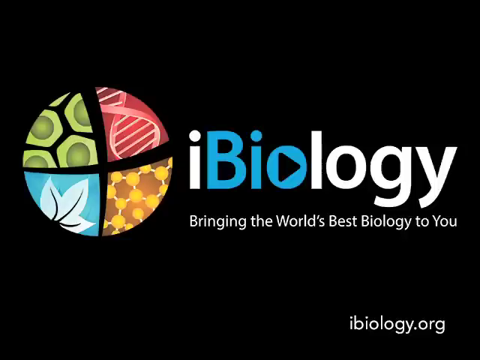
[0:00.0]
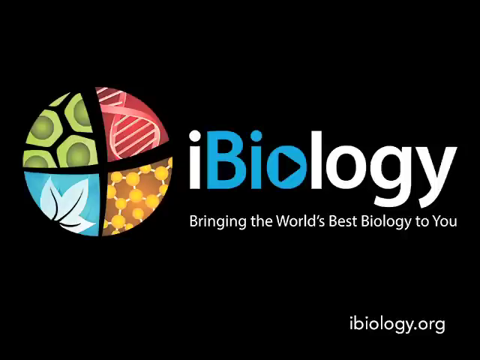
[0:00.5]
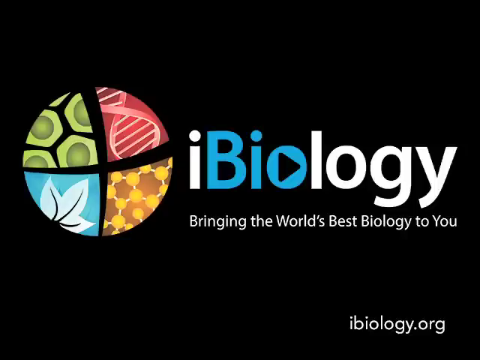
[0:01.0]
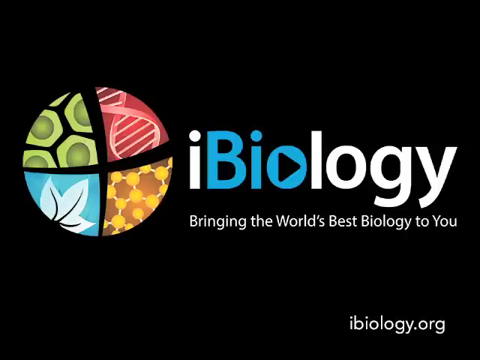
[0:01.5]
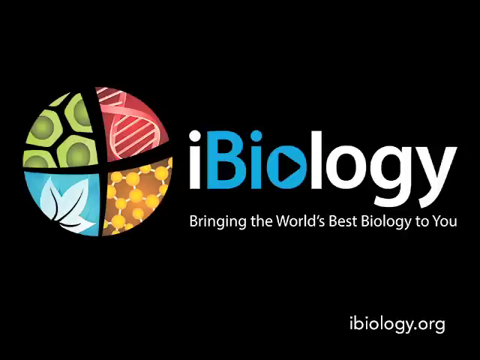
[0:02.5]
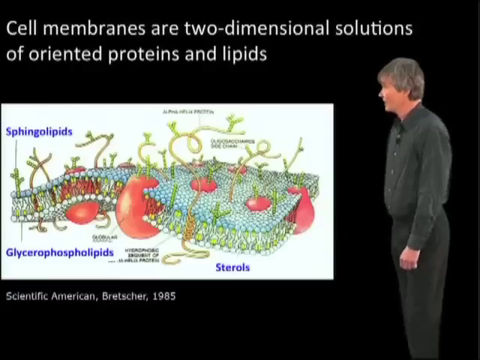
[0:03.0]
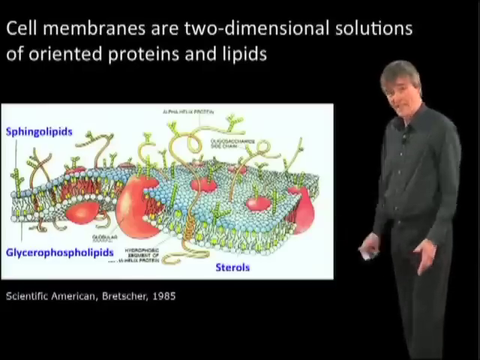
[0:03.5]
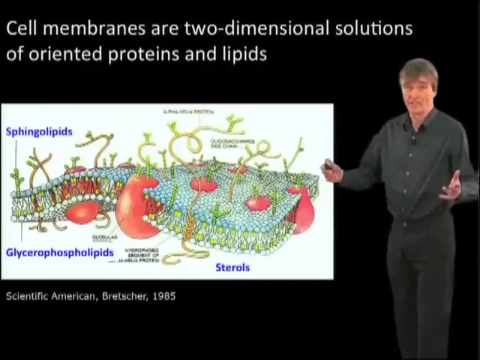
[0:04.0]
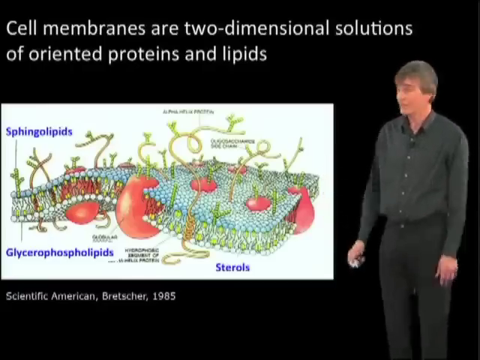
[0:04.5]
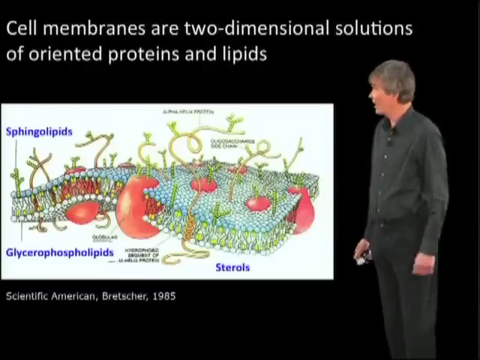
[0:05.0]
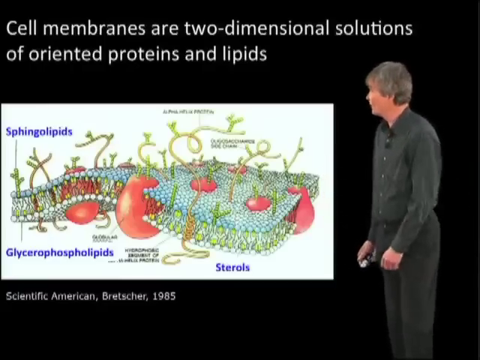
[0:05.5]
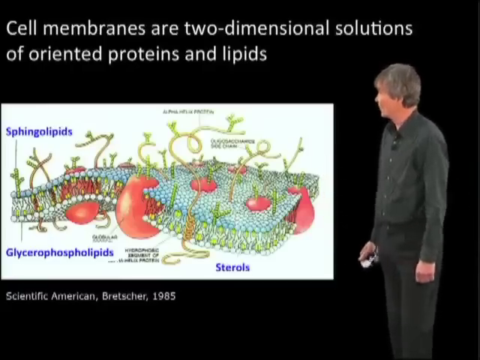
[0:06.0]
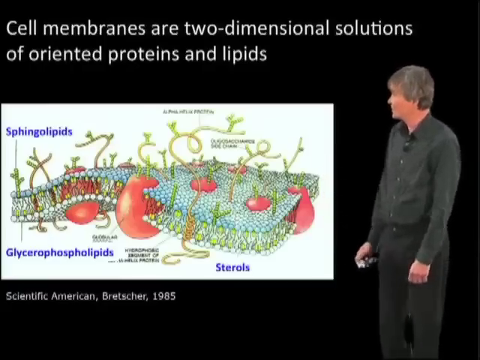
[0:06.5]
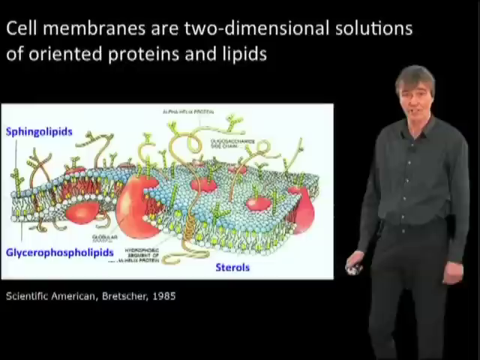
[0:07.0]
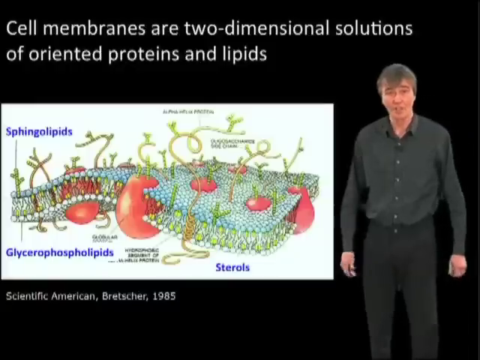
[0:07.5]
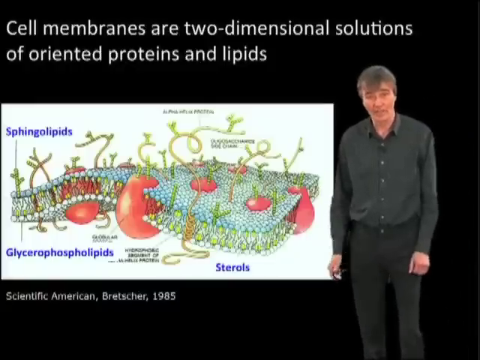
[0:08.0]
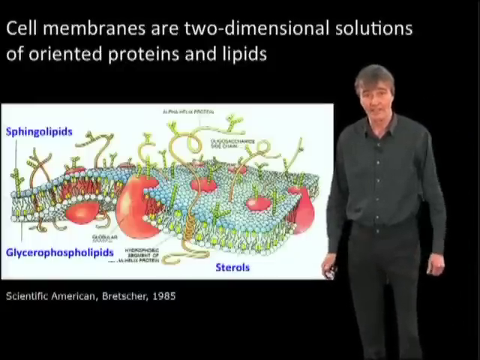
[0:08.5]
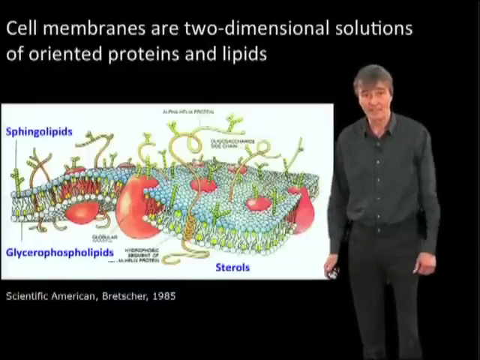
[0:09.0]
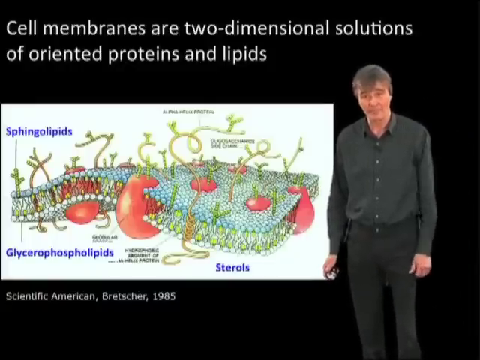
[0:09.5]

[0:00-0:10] The video opens with the iBiology logo and tagline, "bring the world's best biology to you," with "iBiology.org" in the bottom right corner. This first image has a black background with the iBiology logo, which is like a sphere divided into four parts: one part looks like chlorophyll, then, going counterclockwise, a DNA molecule, a molecule made of spheres and sticks, and finally what looks like a blue leaf. The next scene shows an instructor in a black shirt and pants who looks like he is in his fifties, talking. A photo insert of a cell membrane with labels around it appears; the picture is from the Scientific American edition, 1985. Text at the top reads "cell membranes are two-dimensional solutions of oriented proteins and lipids." The membrane picture carries many labels, including glycerophospholipids, sphingolipids and sterols. The instructor holds a clicker to switch the slides behind him, makes periodic eye contact with the camera, and sometimes looks at the screen behind him.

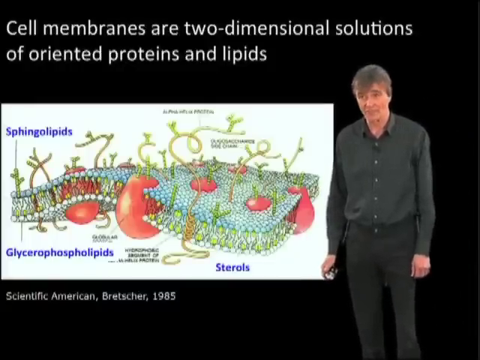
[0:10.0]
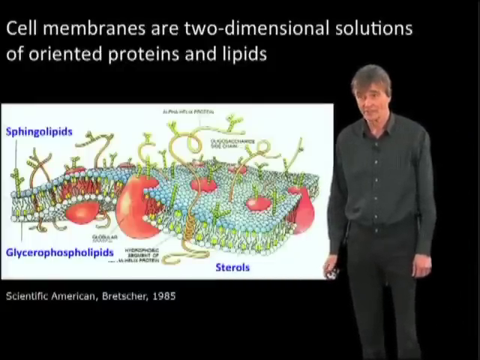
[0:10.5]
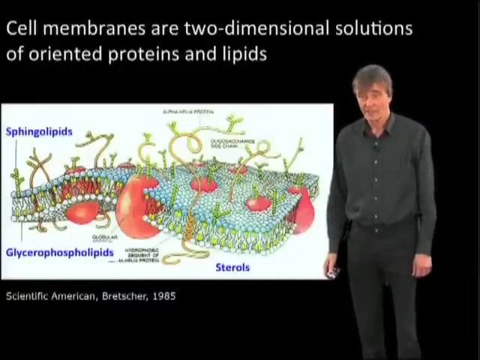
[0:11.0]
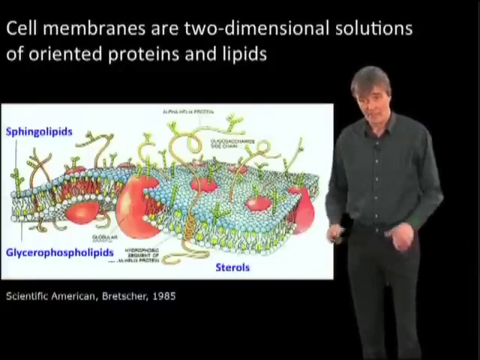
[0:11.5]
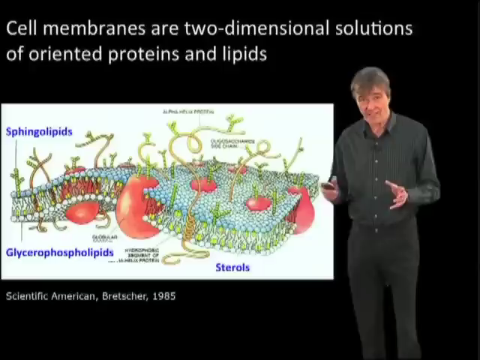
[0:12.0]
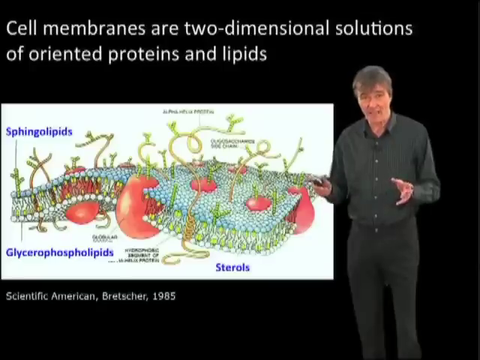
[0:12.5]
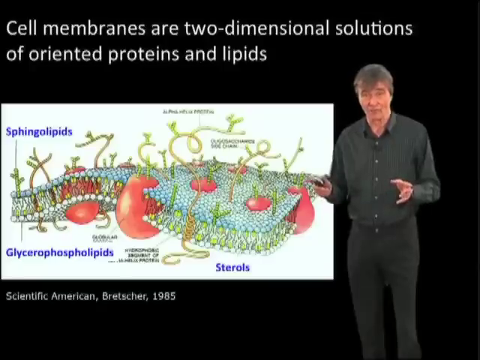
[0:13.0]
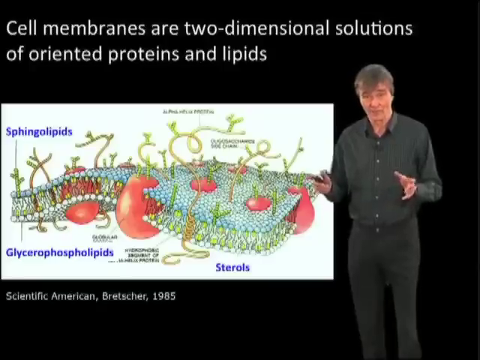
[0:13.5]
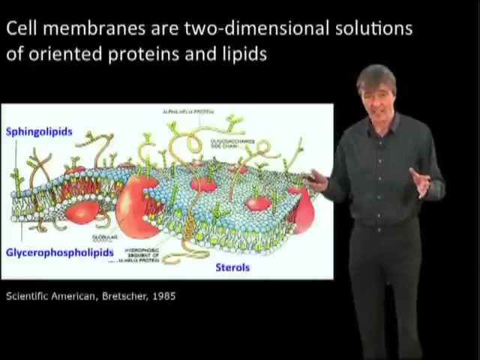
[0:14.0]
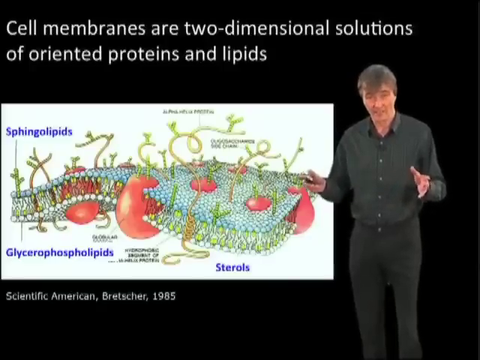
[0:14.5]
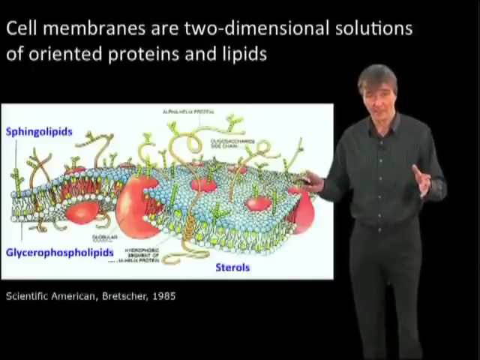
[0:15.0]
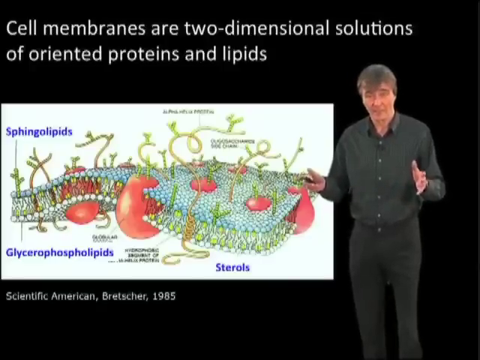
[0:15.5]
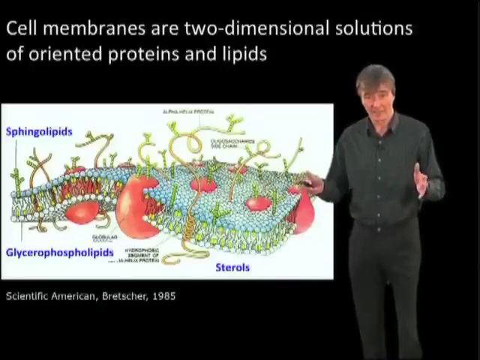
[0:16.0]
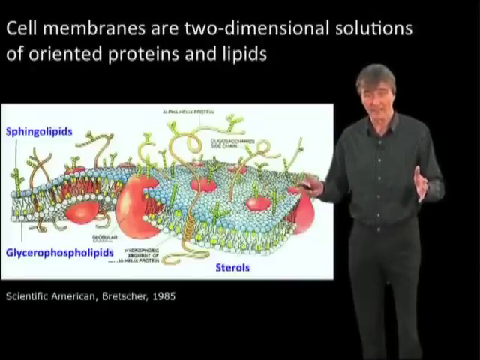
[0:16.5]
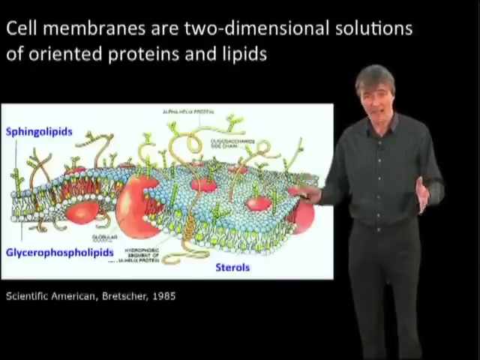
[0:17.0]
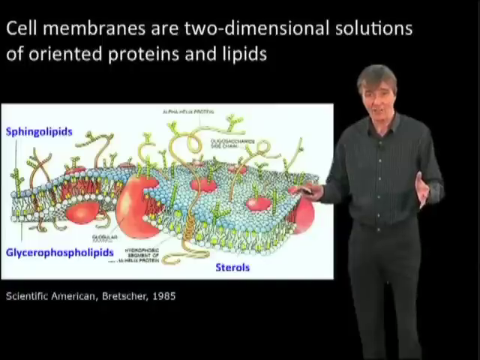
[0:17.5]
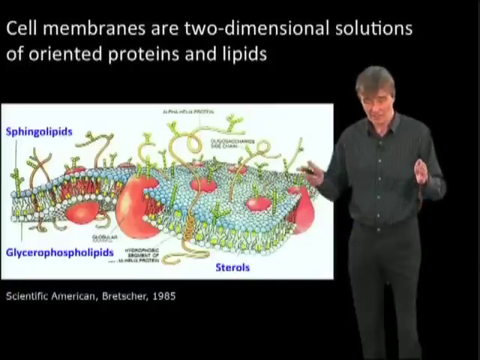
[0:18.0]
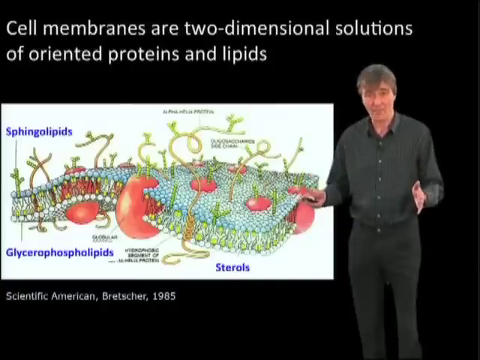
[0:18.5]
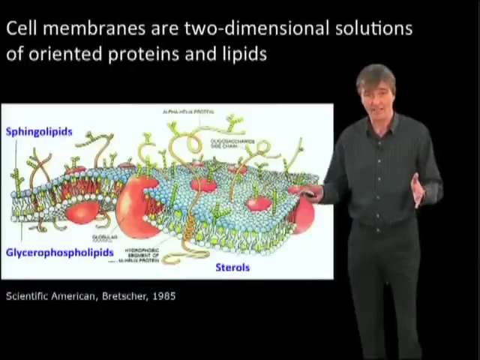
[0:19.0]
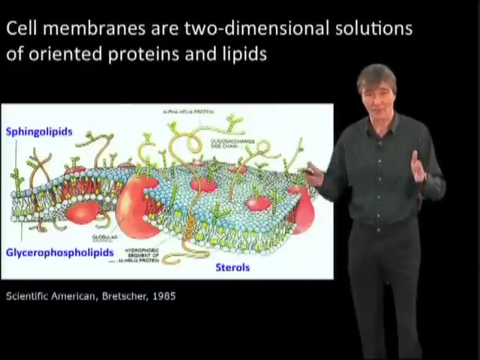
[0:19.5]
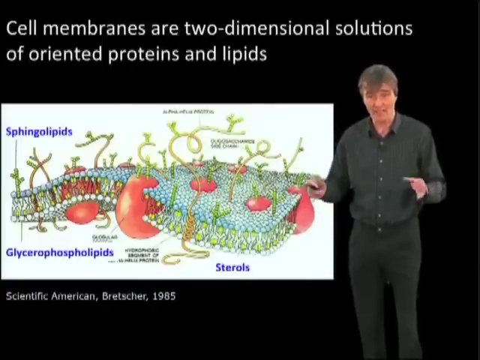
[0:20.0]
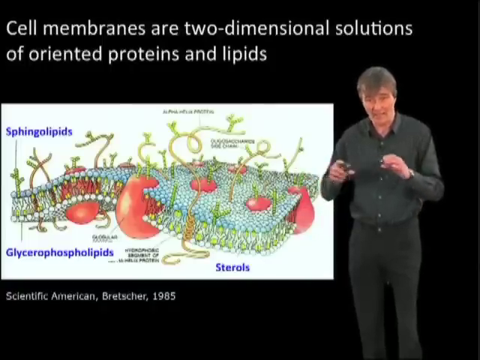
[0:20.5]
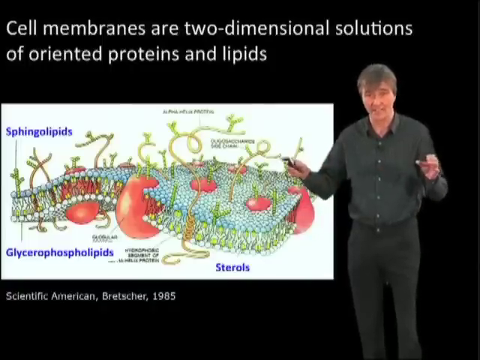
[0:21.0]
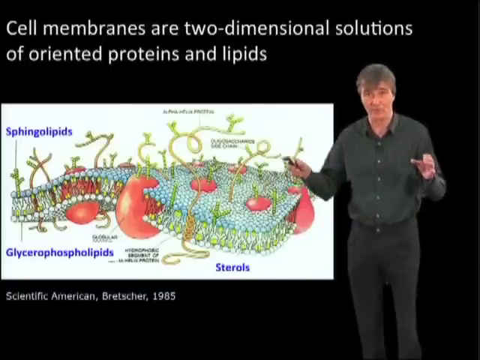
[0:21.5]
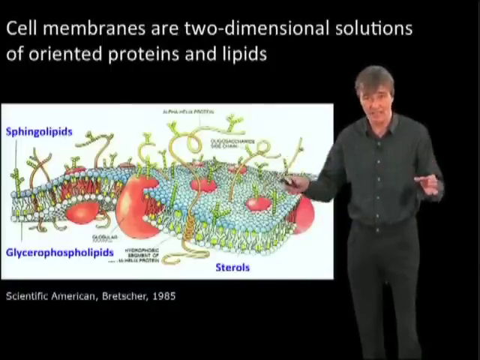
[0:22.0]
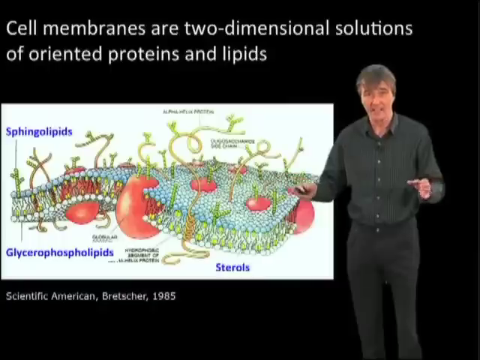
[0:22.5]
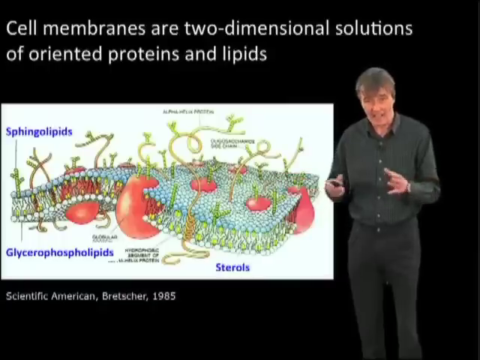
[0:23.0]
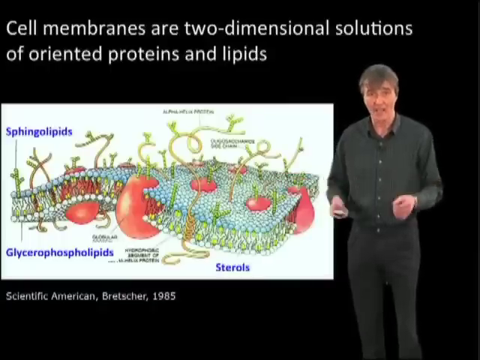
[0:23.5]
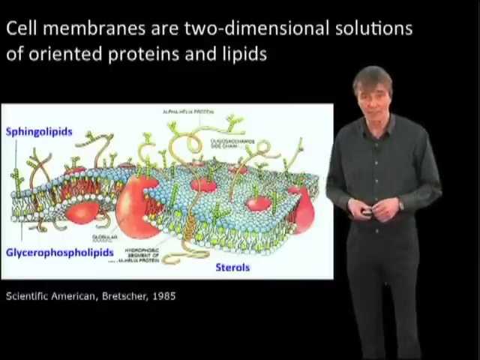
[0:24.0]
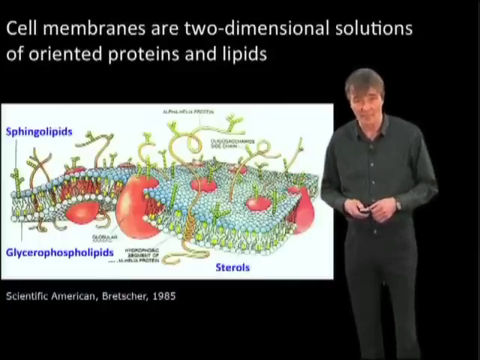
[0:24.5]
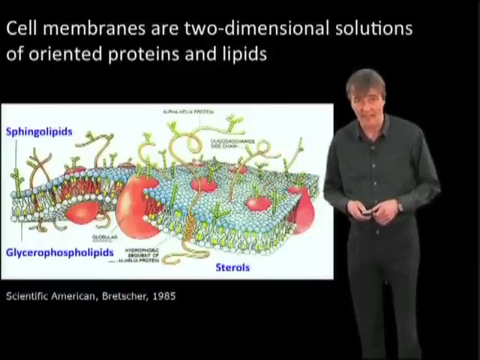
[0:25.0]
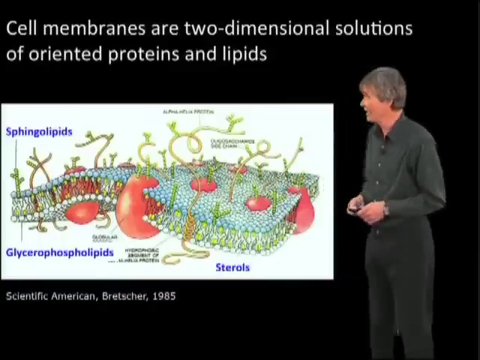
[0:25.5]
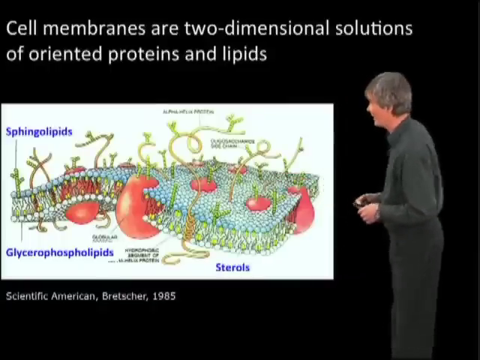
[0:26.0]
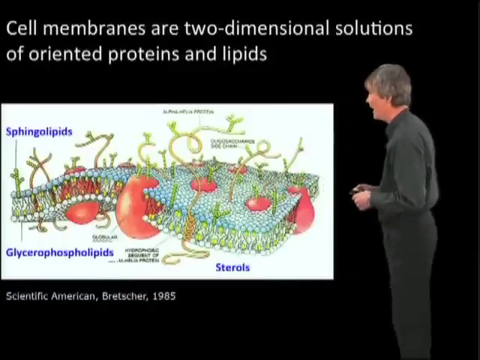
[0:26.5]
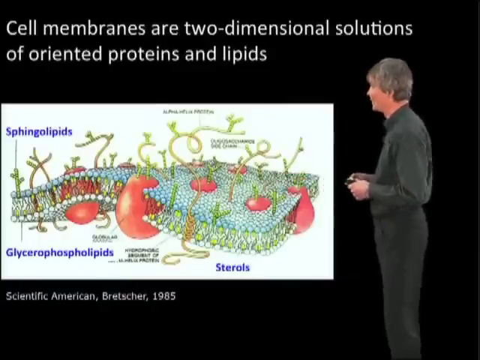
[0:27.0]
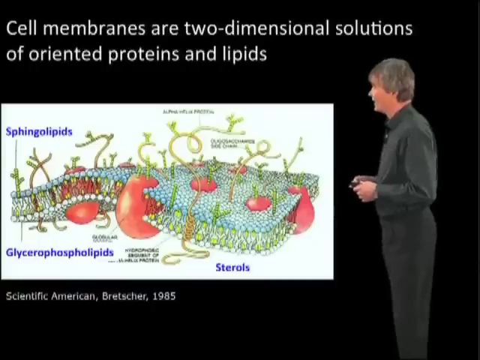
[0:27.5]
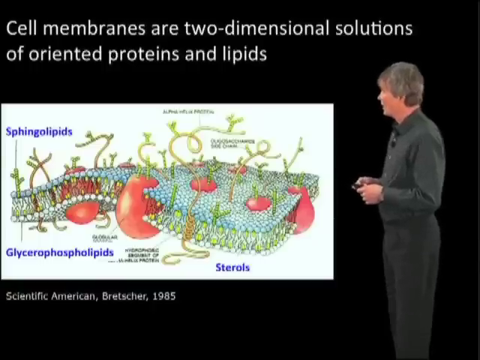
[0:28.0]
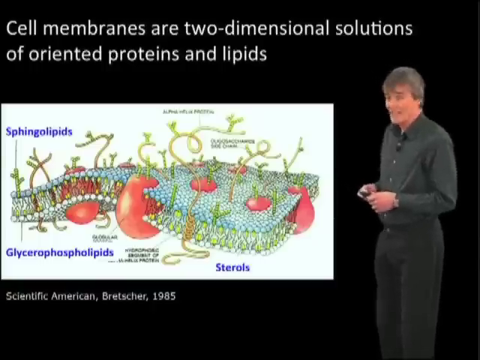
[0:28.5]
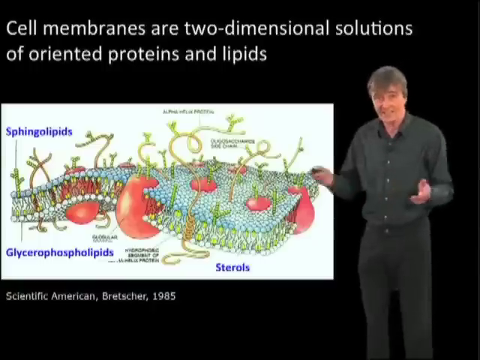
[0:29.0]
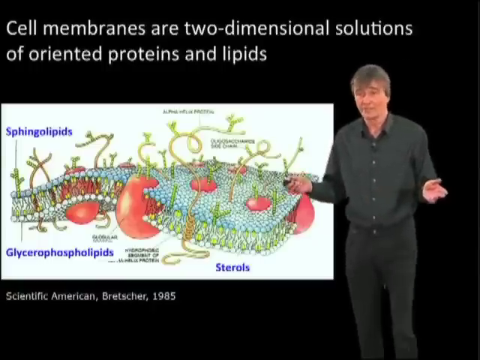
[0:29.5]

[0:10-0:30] The instructor moves his hands as he talks, opening up his arms, with the clicker for the slide behind him in his right hand. He looks at the slide and then continues. He wears a black long-sleeve shirt and black pants, and is a white male who looks to be in his 50s or 60s, with short silver hair. The diagram behind him illustrates the phospholipid bilayer.